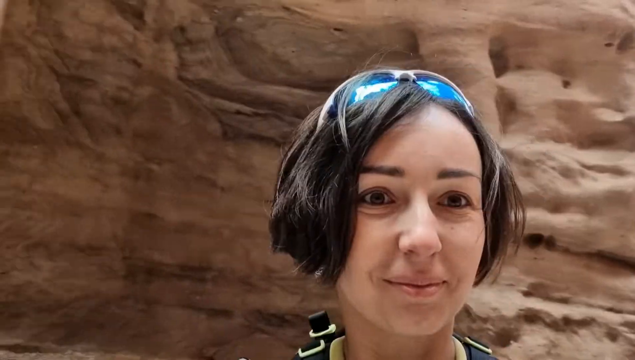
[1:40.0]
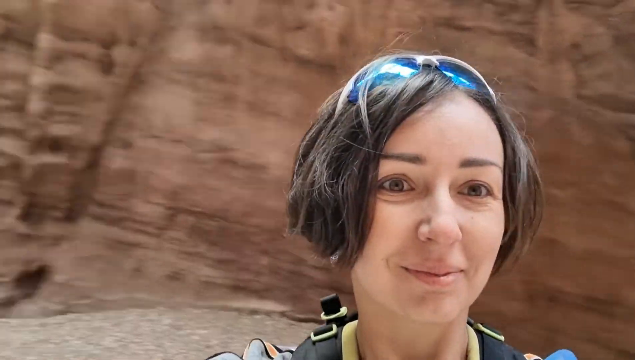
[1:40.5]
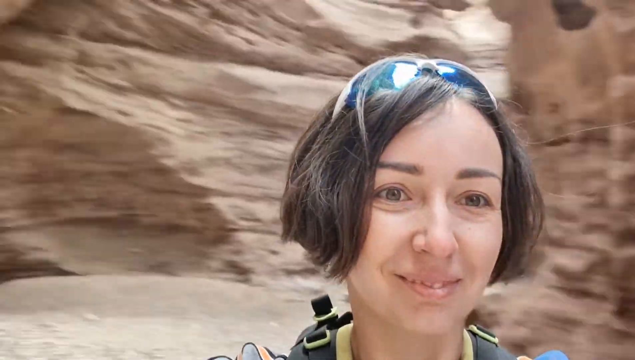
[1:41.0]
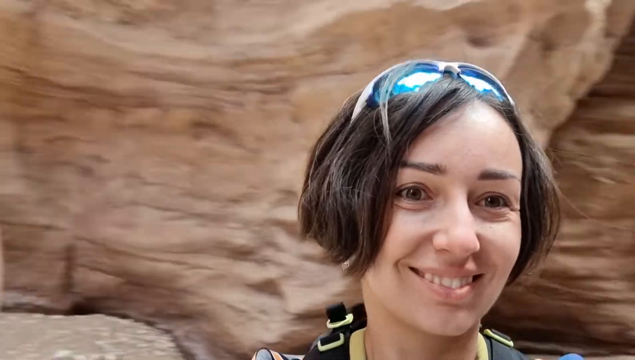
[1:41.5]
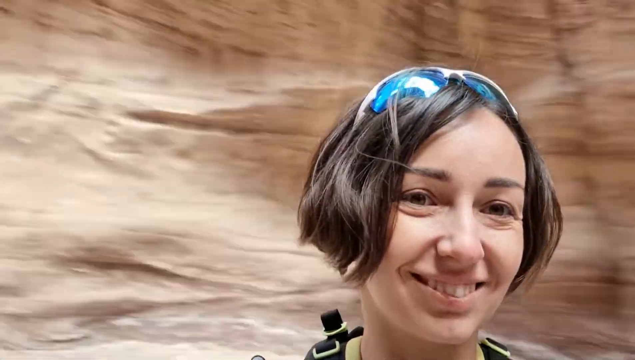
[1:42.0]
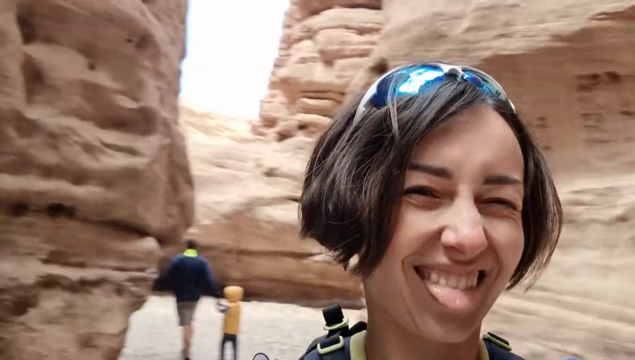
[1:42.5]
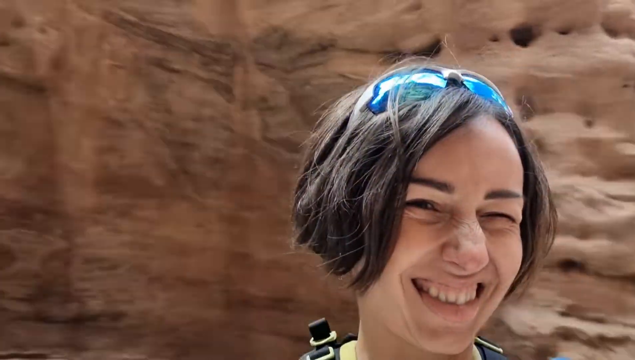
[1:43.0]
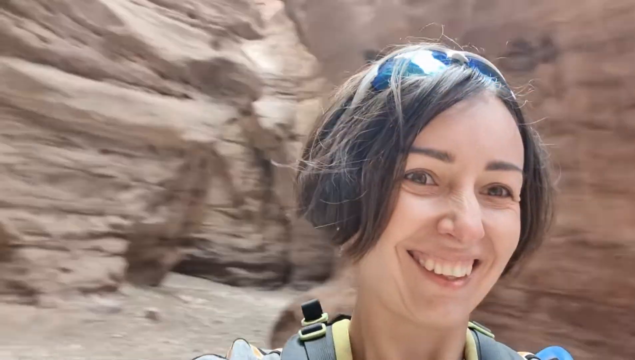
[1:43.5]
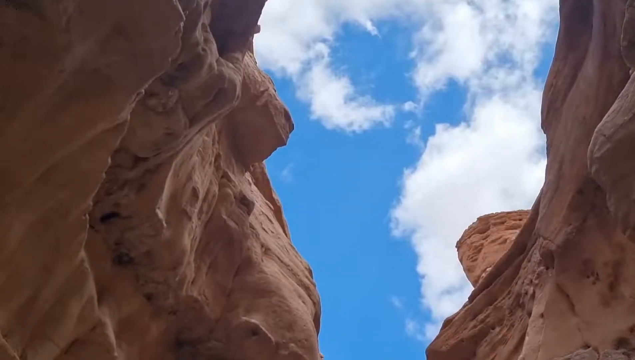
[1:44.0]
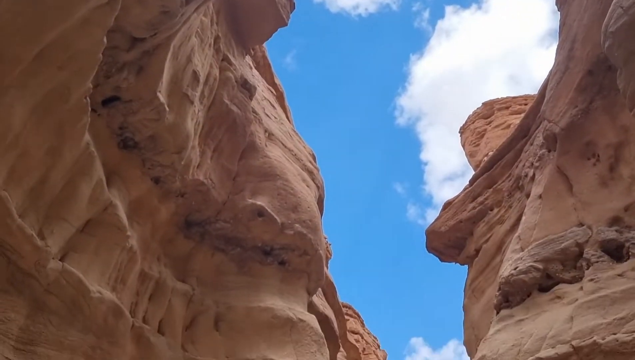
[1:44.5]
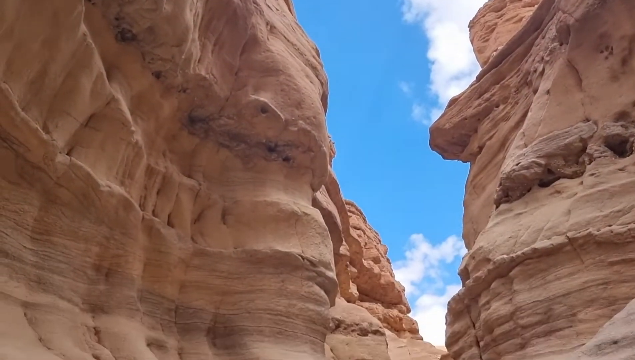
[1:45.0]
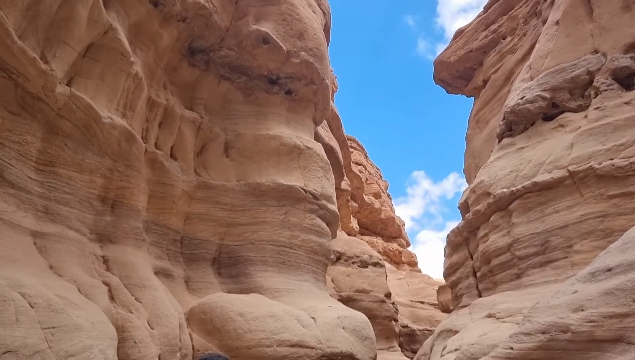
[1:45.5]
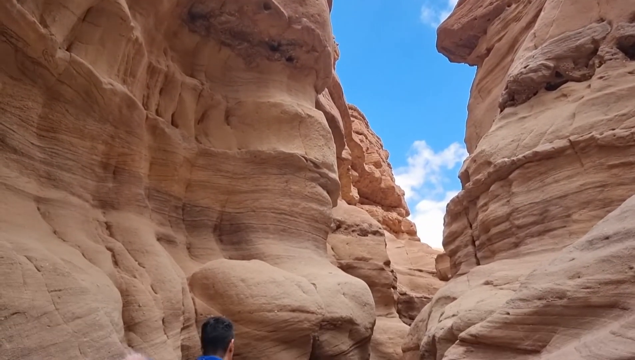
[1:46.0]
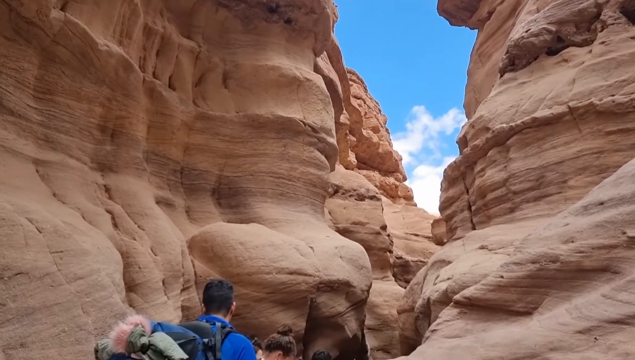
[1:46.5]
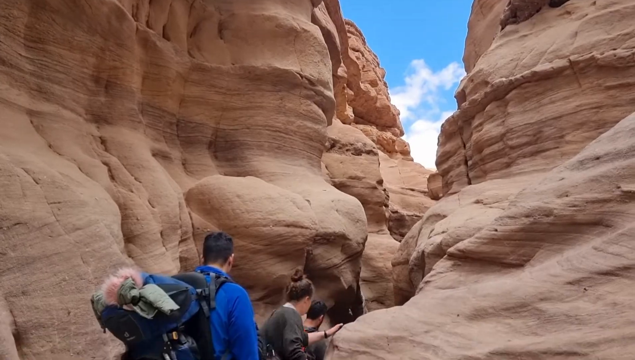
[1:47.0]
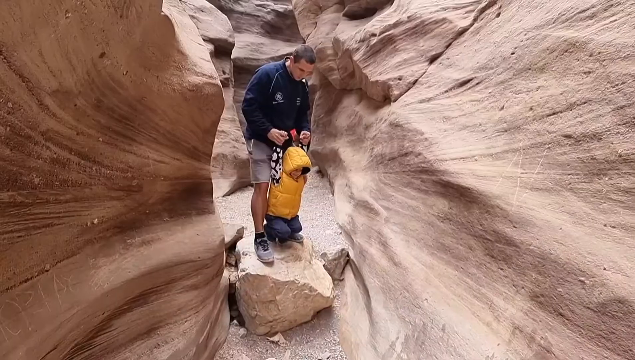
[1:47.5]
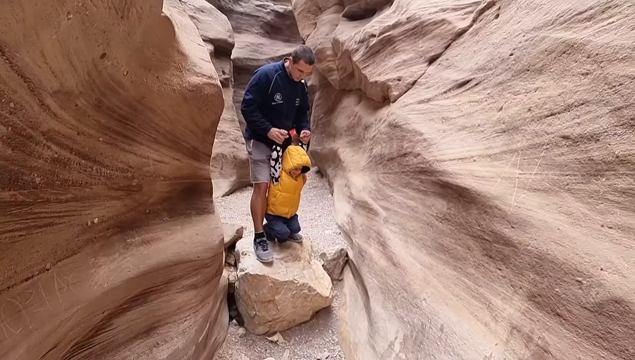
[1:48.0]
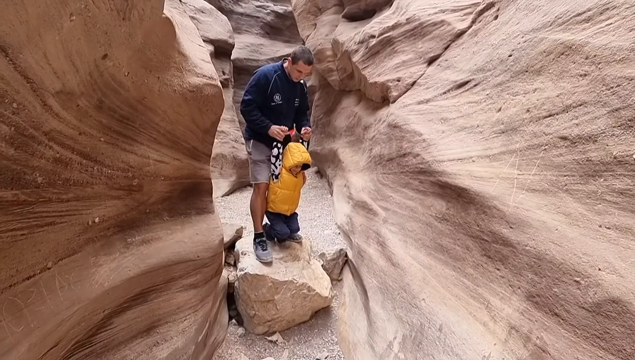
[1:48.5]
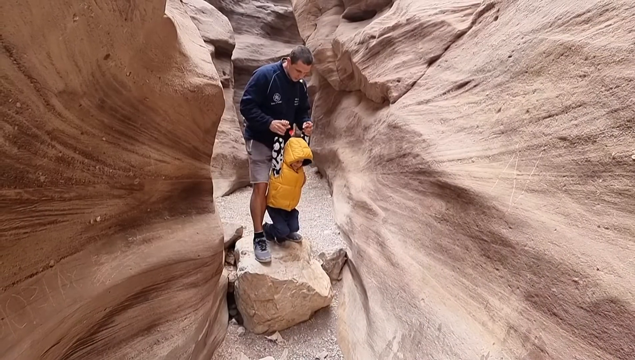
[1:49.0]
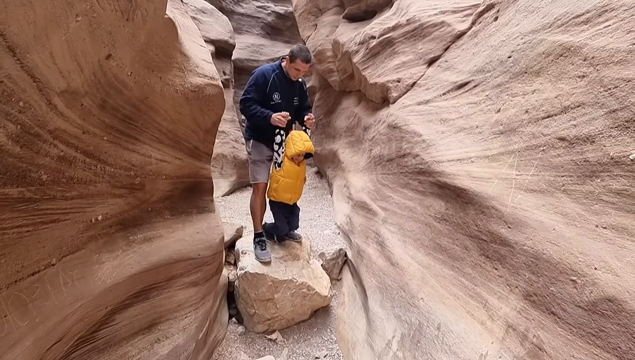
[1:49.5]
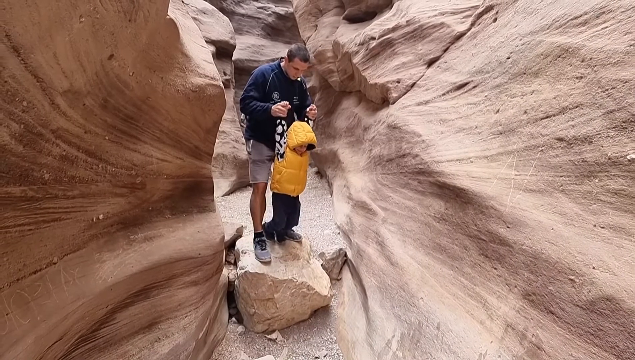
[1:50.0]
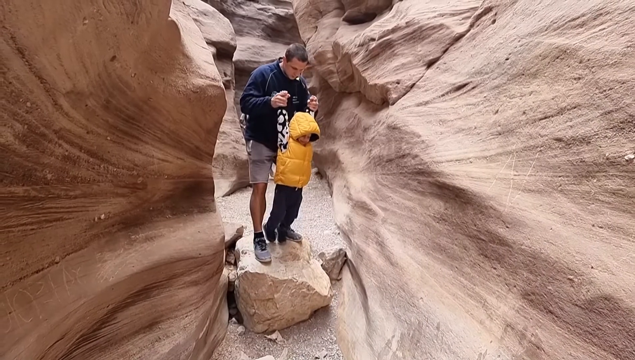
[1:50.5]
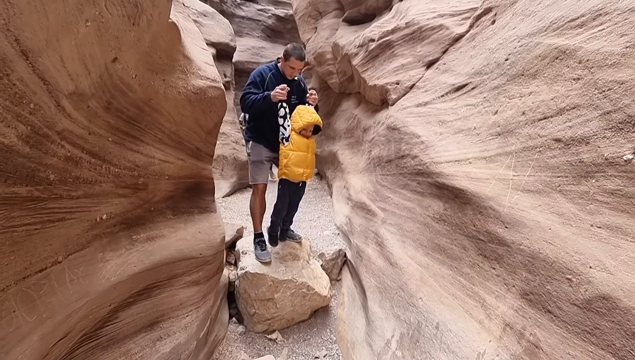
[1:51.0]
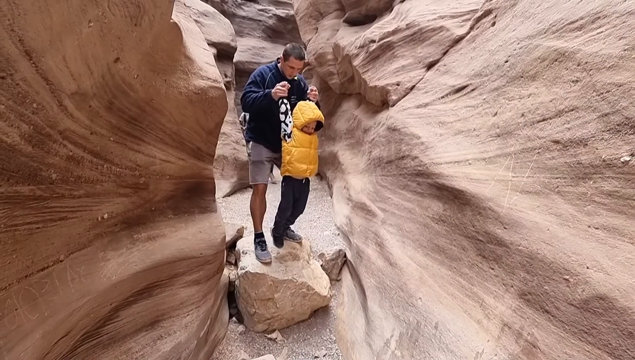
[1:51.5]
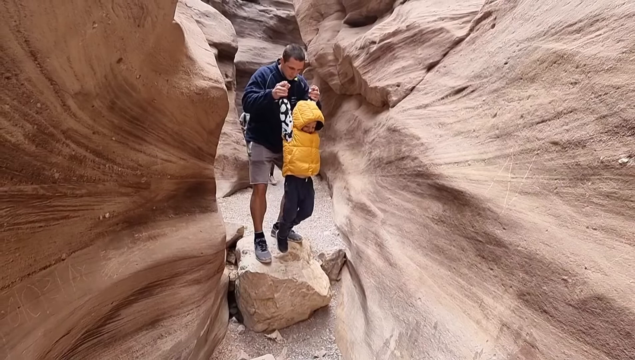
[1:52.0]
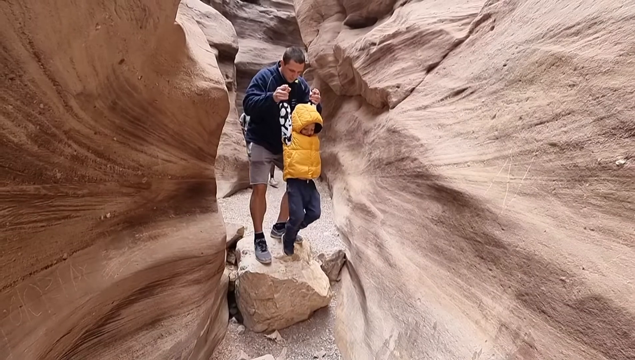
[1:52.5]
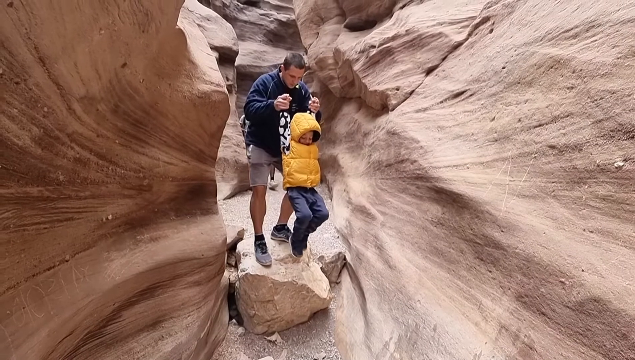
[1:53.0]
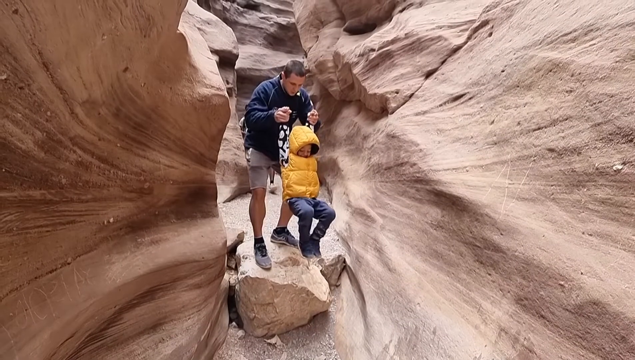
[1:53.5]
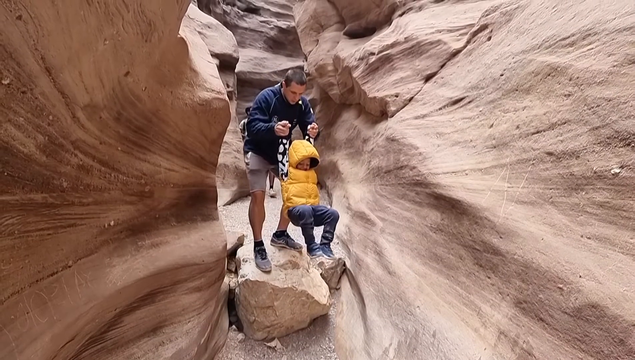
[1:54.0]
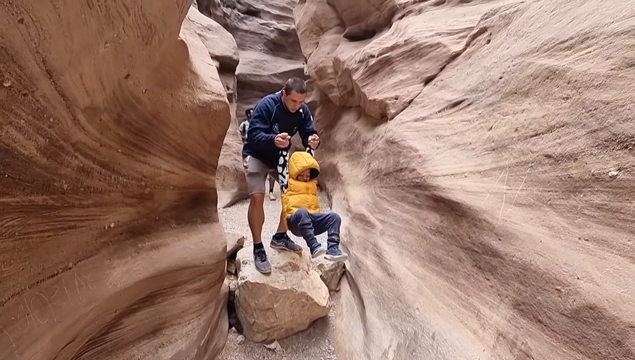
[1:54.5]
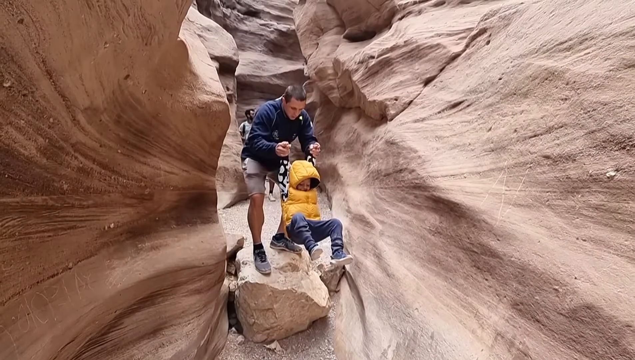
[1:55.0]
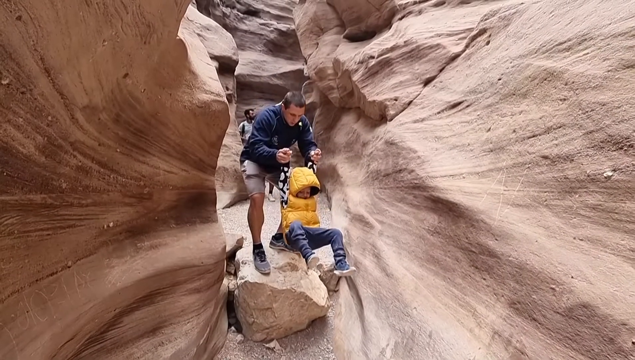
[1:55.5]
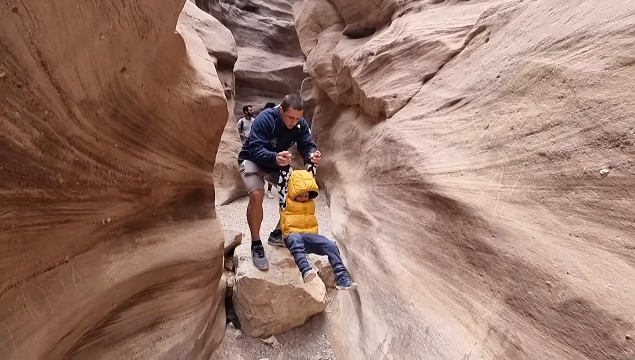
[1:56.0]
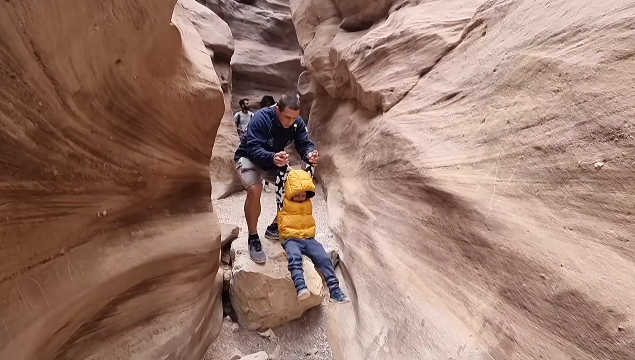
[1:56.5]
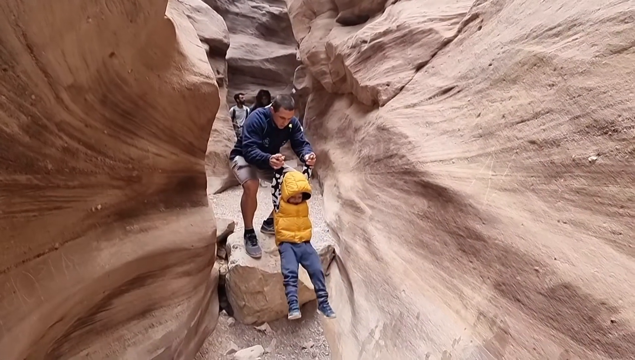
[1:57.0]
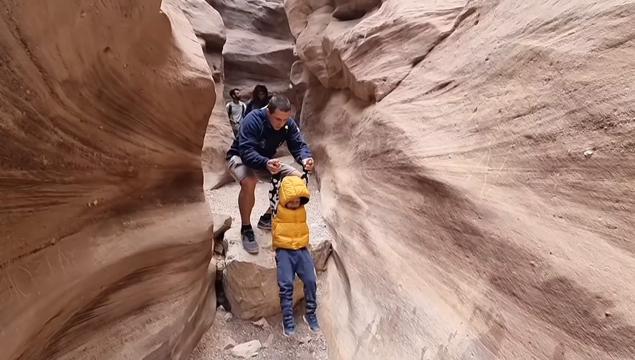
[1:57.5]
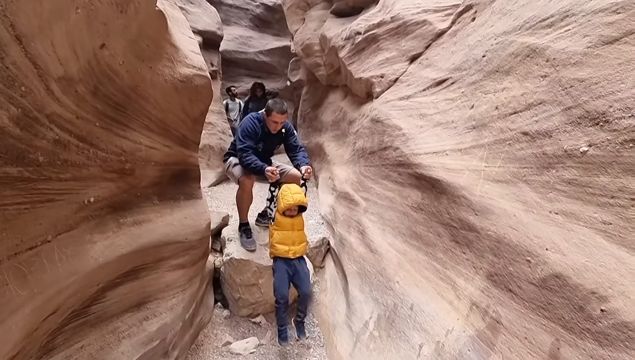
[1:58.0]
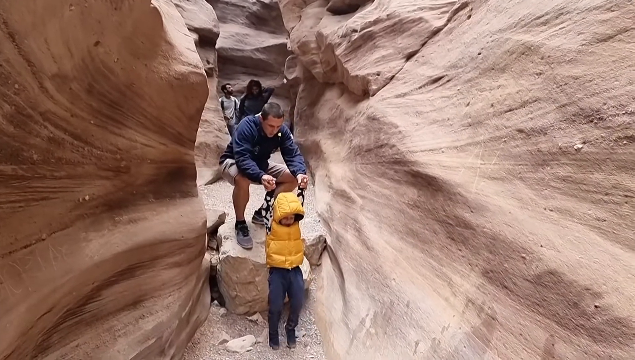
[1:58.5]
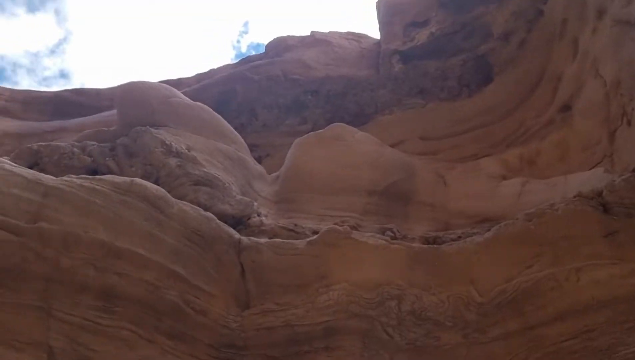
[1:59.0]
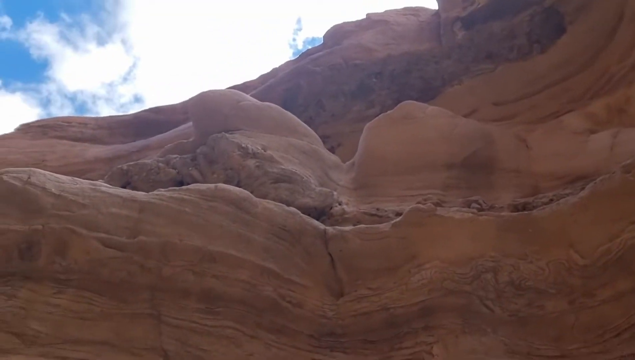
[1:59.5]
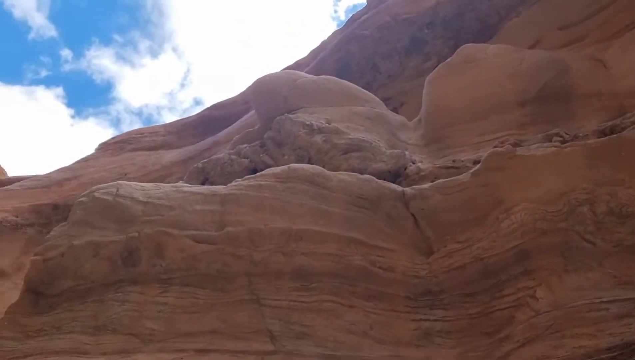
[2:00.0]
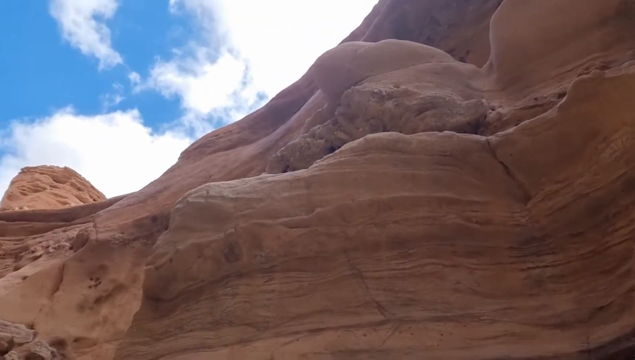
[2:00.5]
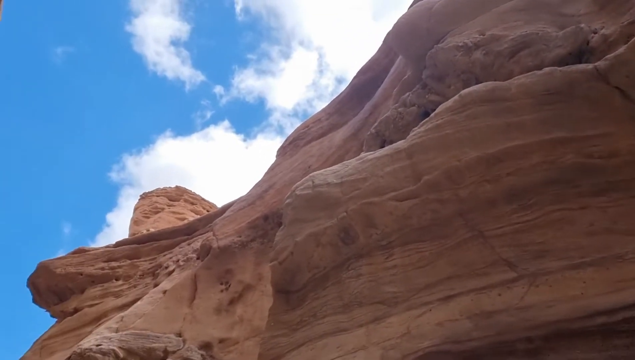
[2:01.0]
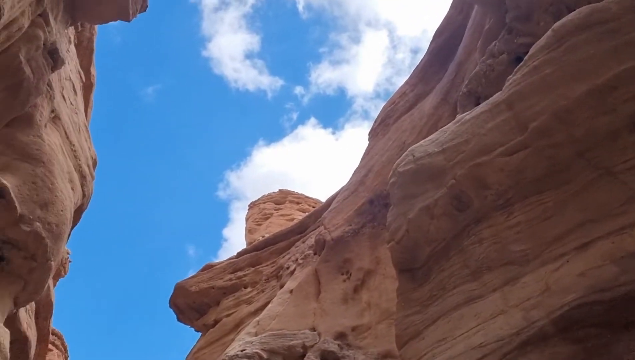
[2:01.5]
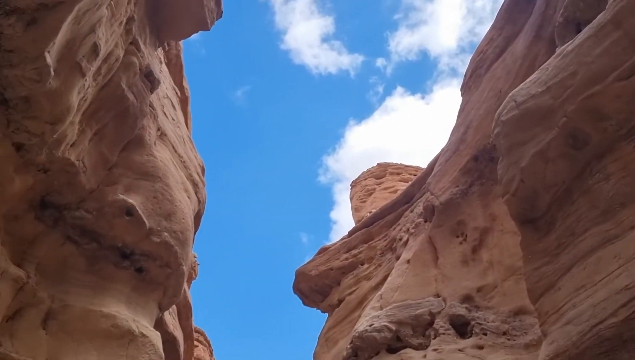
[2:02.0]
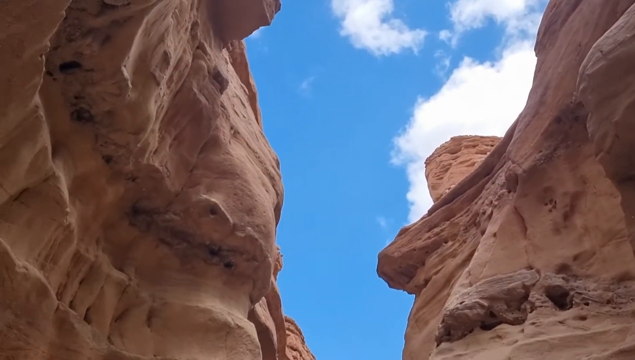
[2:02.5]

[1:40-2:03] A woman films herself turning in a circle, seemingly having a happy moment with her family as they play, run around and laugh. At one point the camera pans up to the sky, a brilliant blue with white clouds, contrasting with the very orange, very brown desert landscape. The kids are very young, appearing to be elementary school age, and look to all be boys; the only girl or woman seen is the mother. They wear long-sleeve shirts, sneakers and socks, and jump and run around. What appears to be a father figure is also with the kids. Everyone seems to be playing, climbing and running around. Metal railings are in place as safety measures.